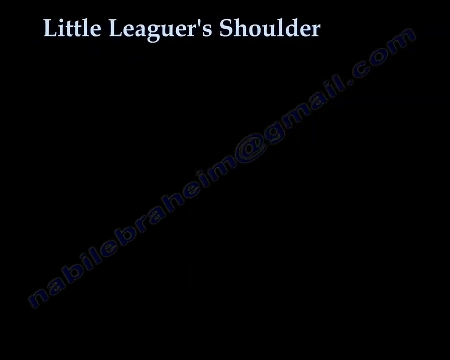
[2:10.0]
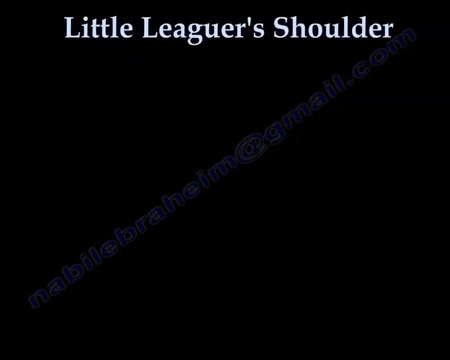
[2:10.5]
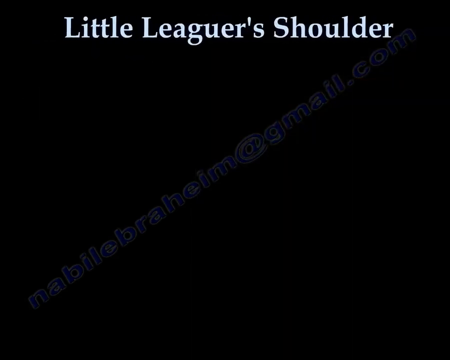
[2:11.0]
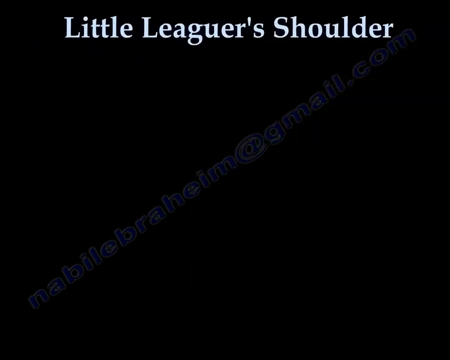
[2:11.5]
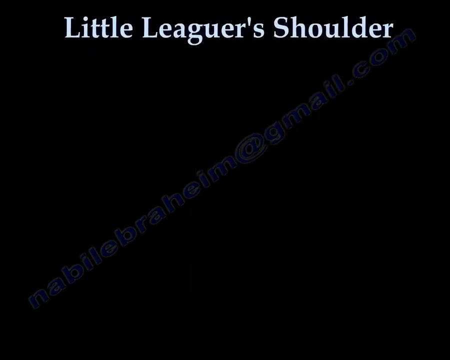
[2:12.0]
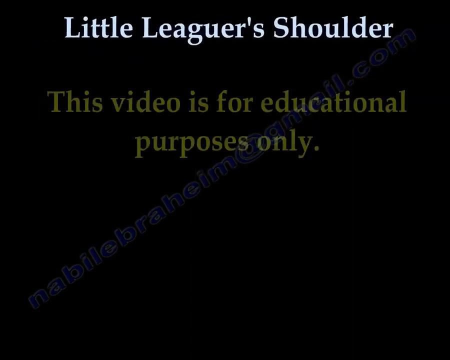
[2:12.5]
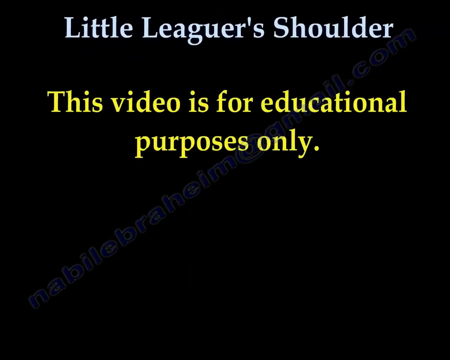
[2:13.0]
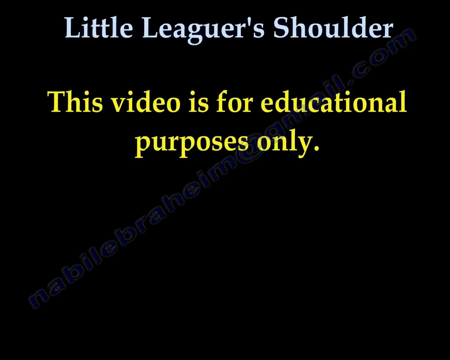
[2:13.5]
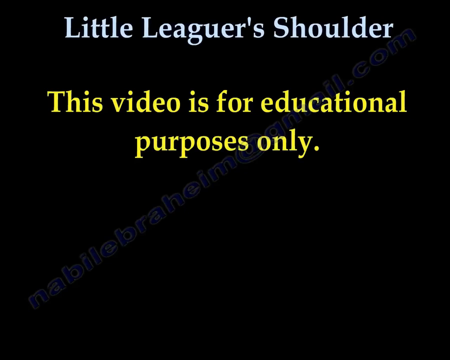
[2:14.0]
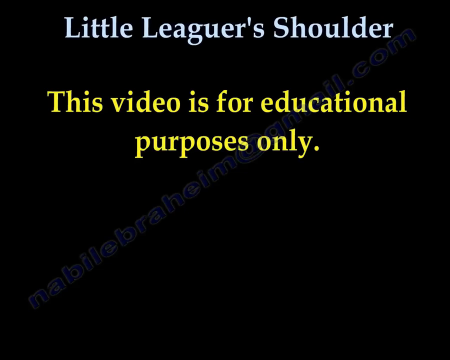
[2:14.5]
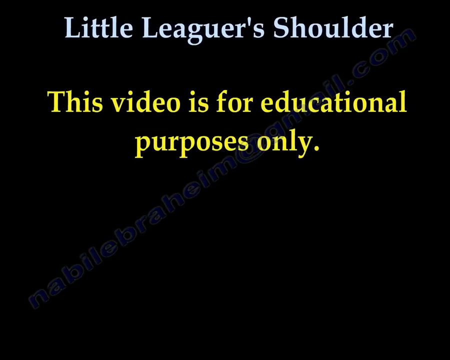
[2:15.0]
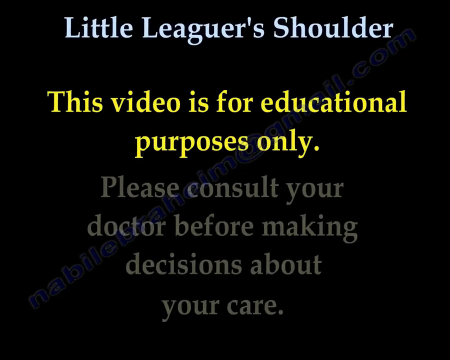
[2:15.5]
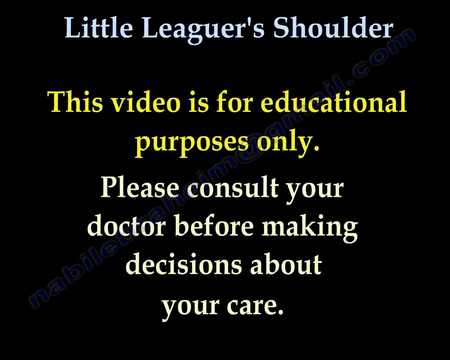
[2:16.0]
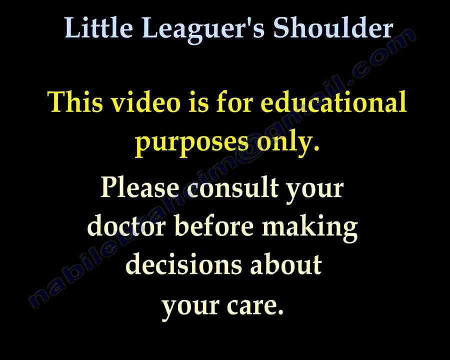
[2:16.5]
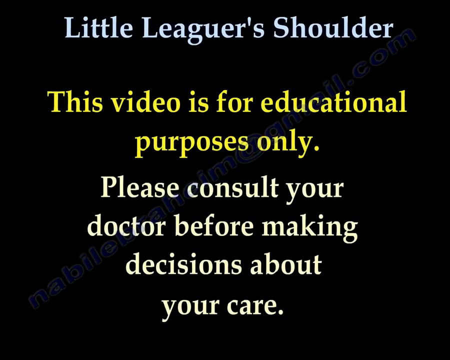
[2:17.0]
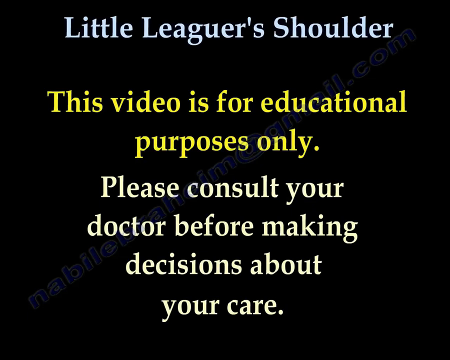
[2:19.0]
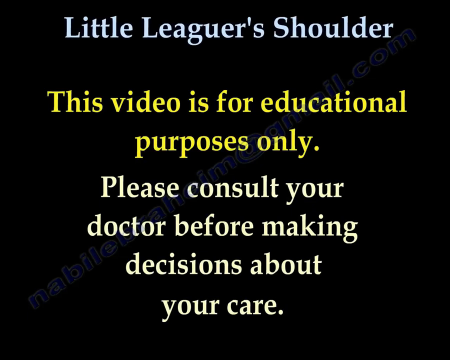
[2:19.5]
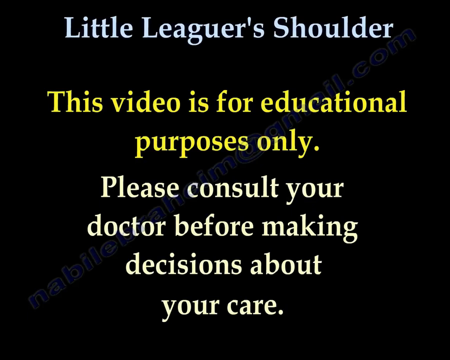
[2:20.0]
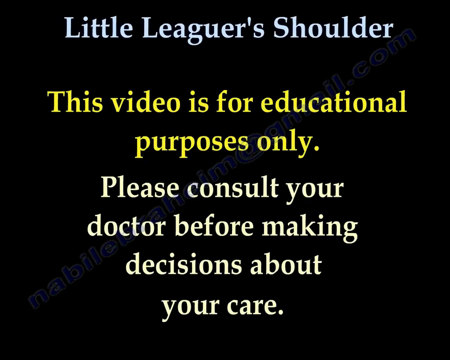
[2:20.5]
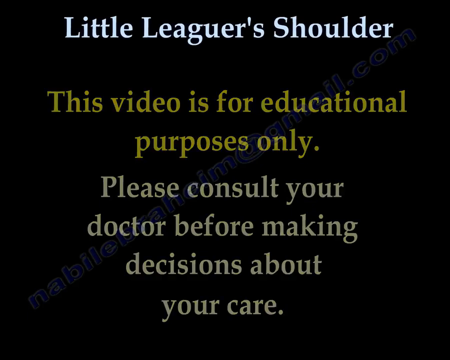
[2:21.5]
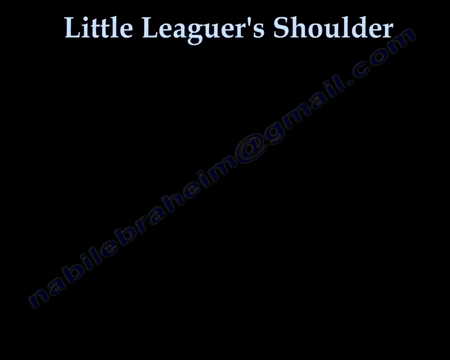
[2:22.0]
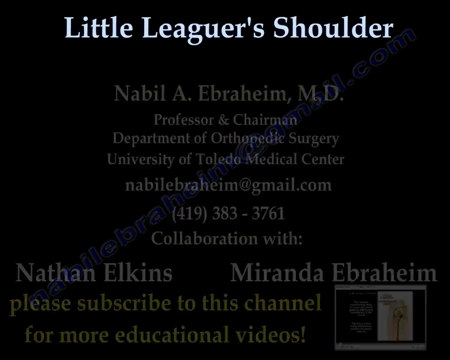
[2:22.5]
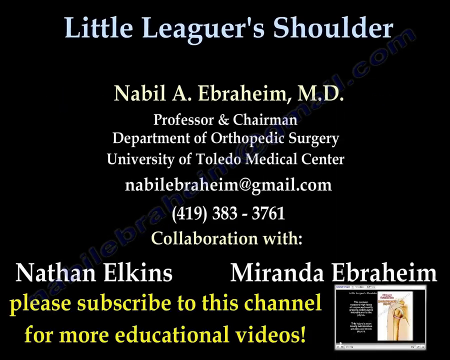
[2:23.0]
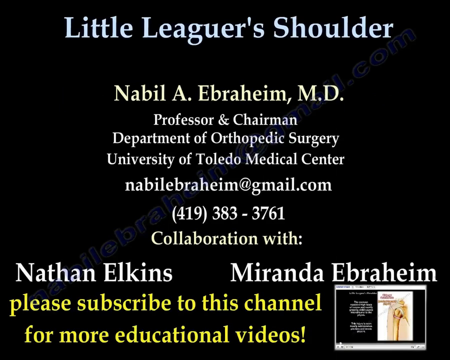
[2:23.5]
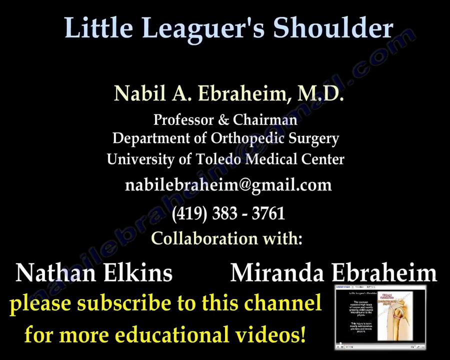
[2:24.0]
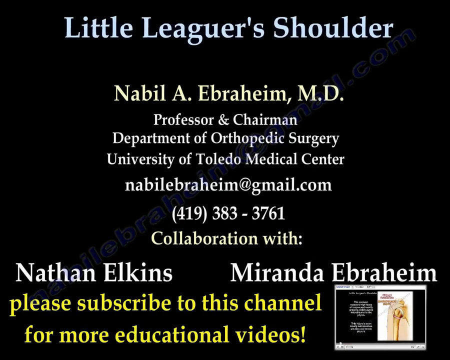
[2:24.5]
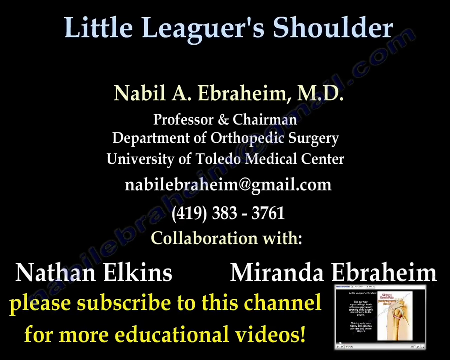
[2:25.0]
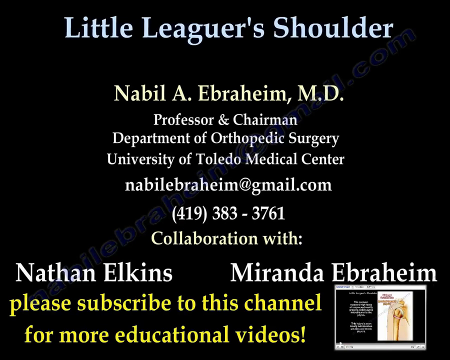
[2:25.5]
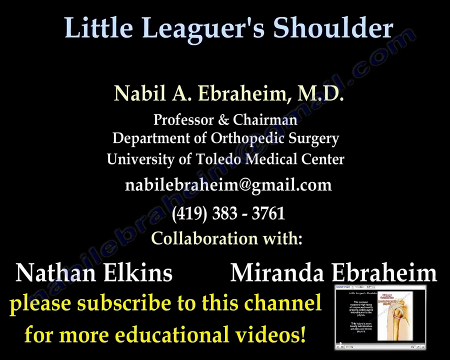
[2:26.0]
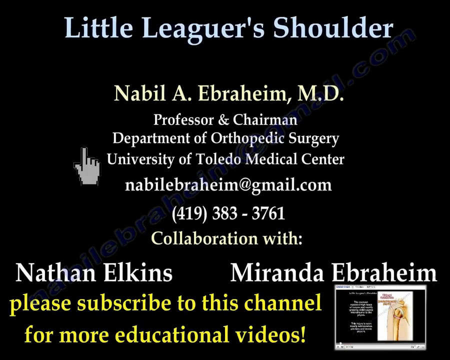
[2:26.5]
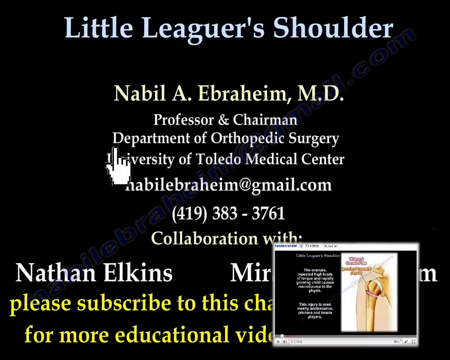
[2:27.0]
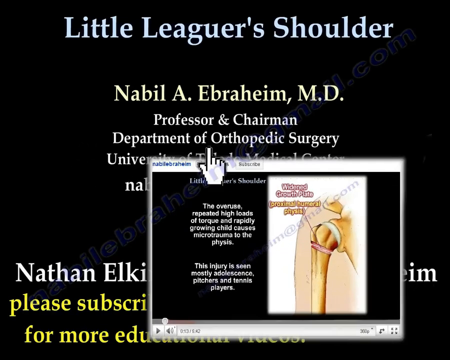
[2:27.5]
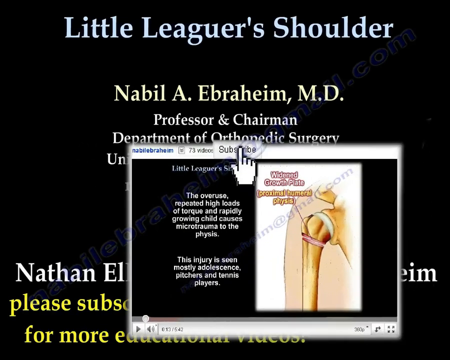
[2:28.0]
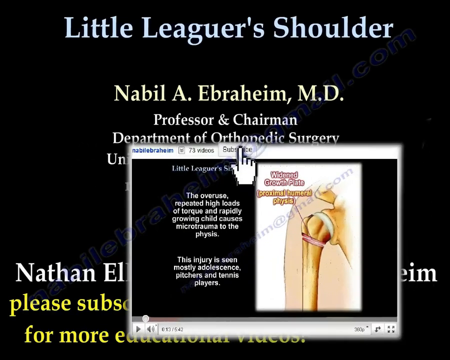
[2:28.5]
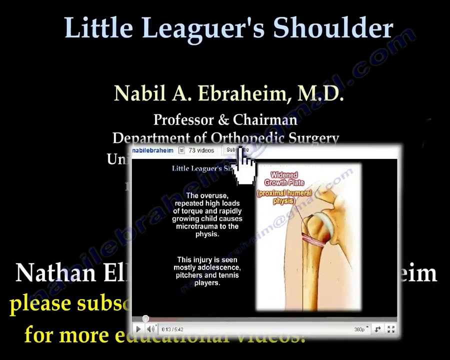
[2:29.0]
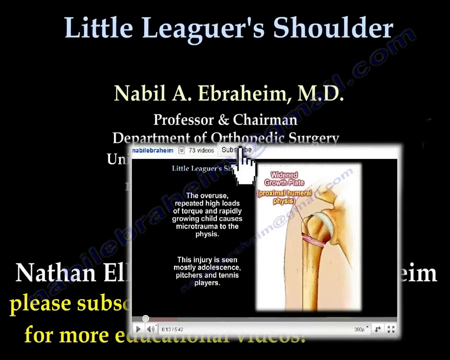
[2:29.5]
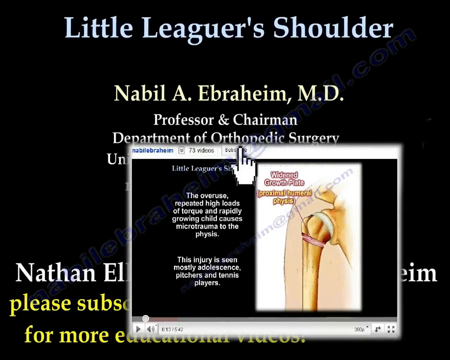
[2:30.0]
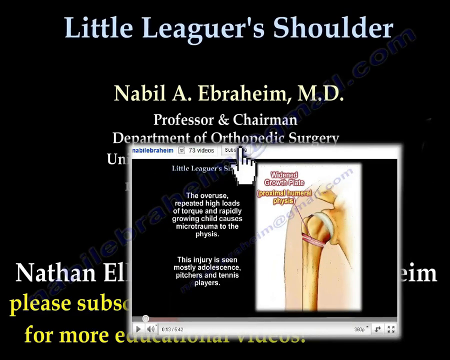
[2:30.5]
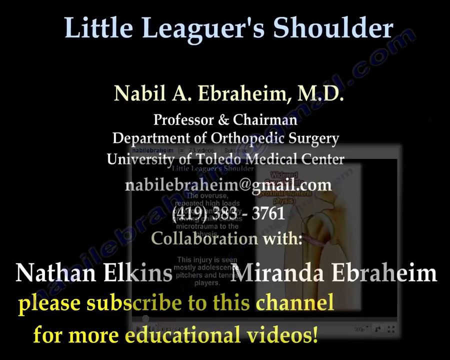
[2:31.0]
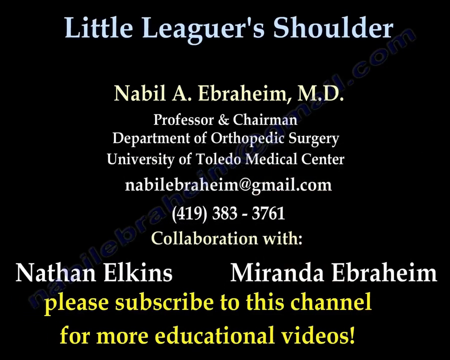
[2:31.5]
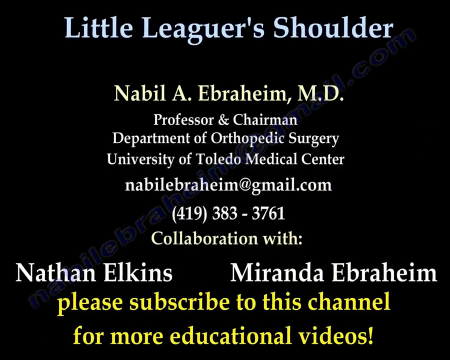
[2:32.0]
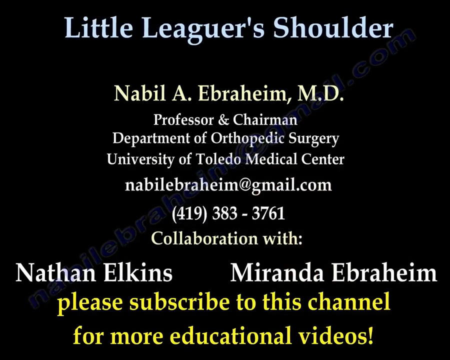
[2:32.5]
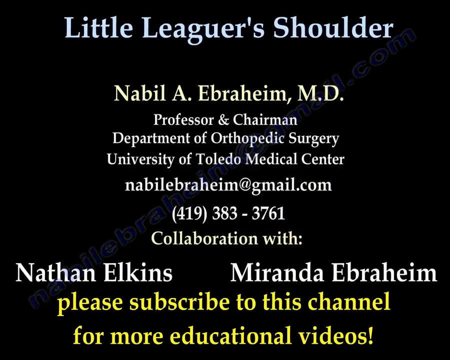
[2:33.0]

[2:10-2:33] At the top, white letters against a black backdrop read "little leaguers shoulder". Below that, yellow letters say "this video is for educational purposes only", and below that, white letters read "please consult your doctor before making decisions about your care." The name of a doctor follows: "Nabil A. Ebraheim, MD", "professor and chairman, Department of Orthopedic Surgery, University of Toledo Medical Center." Below that is his Gmail address, and then his phone number, "419-383-3761." Below that it states "collaboration with Nathan Elkins, Miranda Ebraheimm", and below that, in yellow letters, "please subscribe to this channel for more educational videos." A graphic then moves to the center of the screen, and a white hand serving as a cursor appears to click on part of the screen. The video then cuts off and ends.